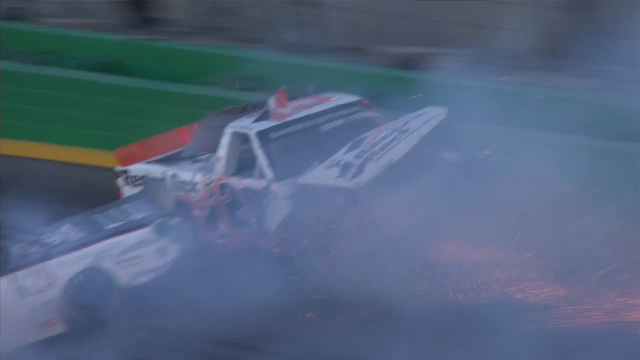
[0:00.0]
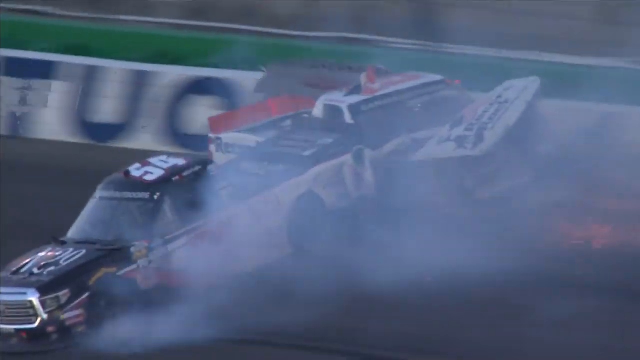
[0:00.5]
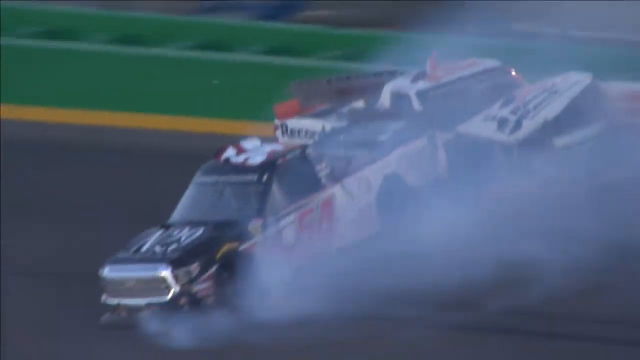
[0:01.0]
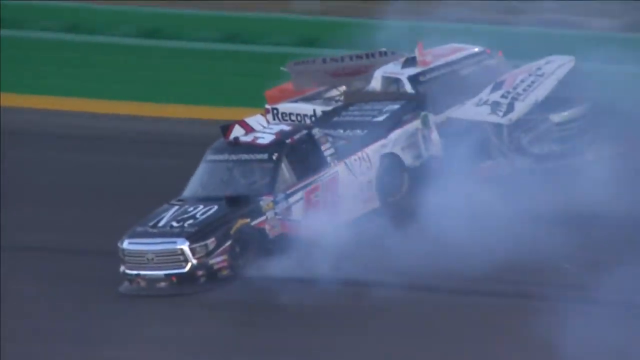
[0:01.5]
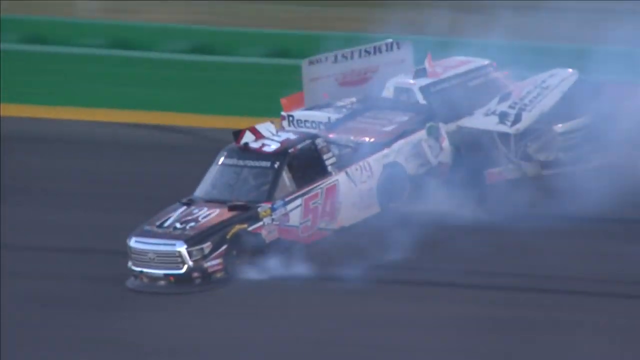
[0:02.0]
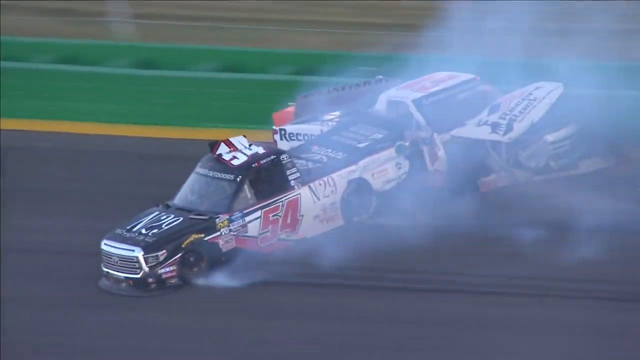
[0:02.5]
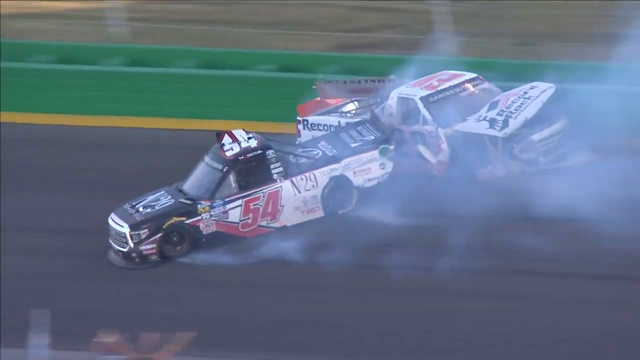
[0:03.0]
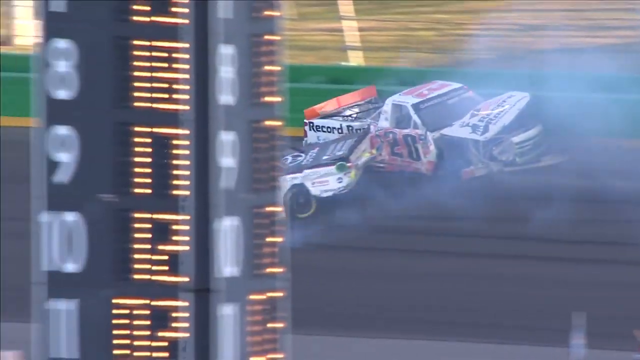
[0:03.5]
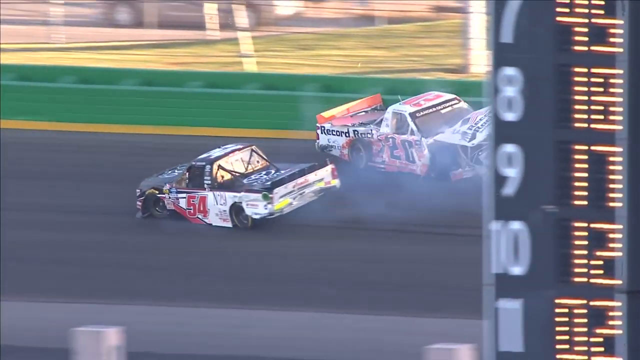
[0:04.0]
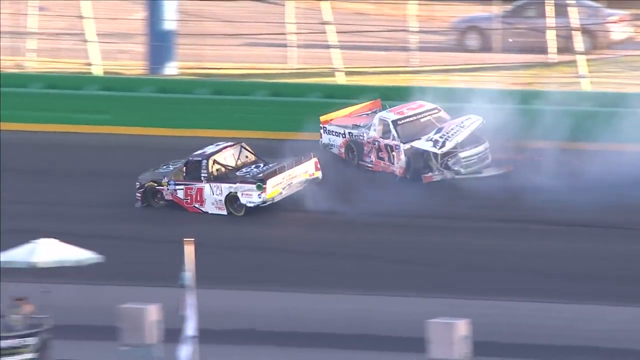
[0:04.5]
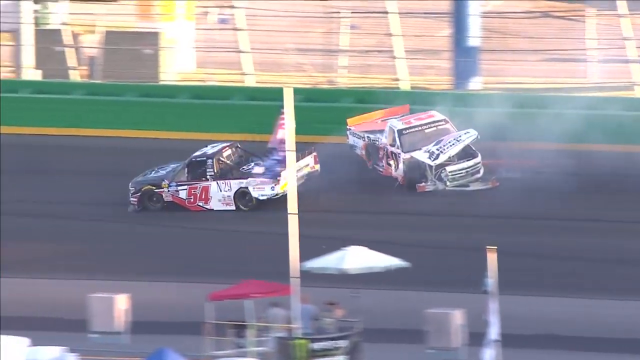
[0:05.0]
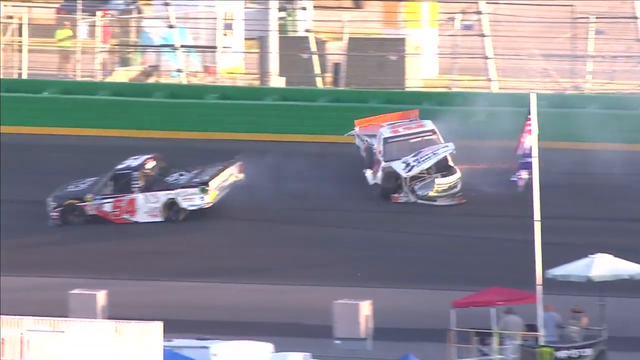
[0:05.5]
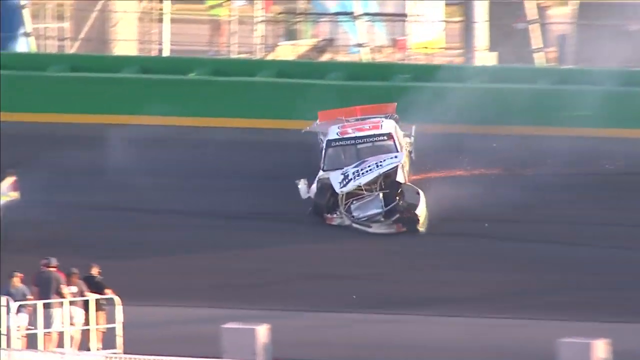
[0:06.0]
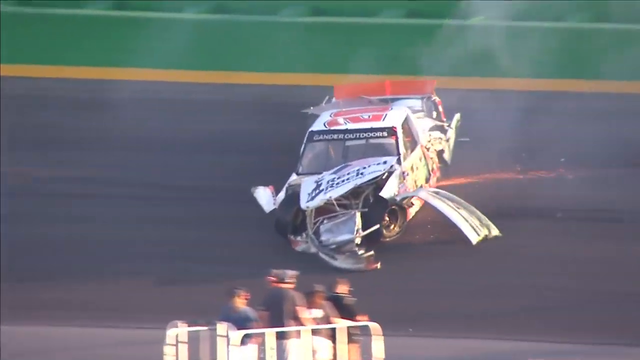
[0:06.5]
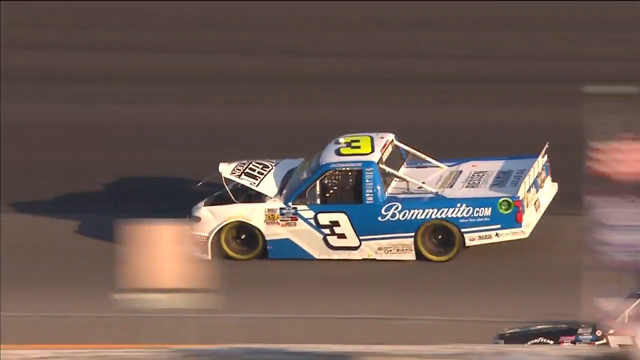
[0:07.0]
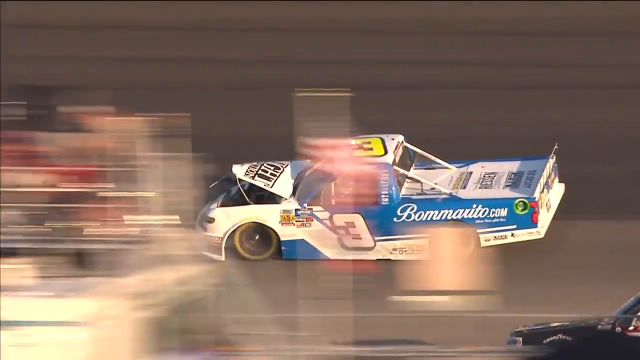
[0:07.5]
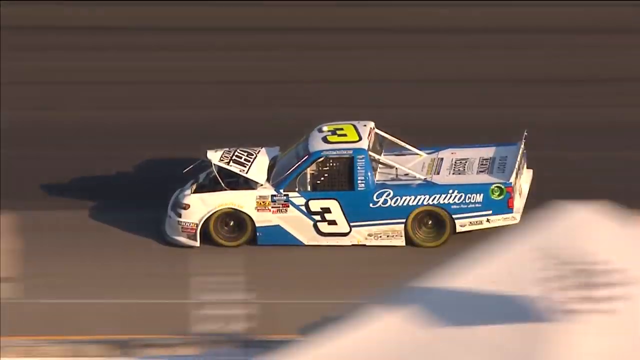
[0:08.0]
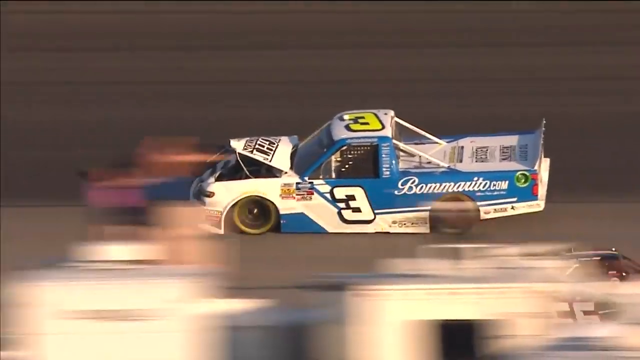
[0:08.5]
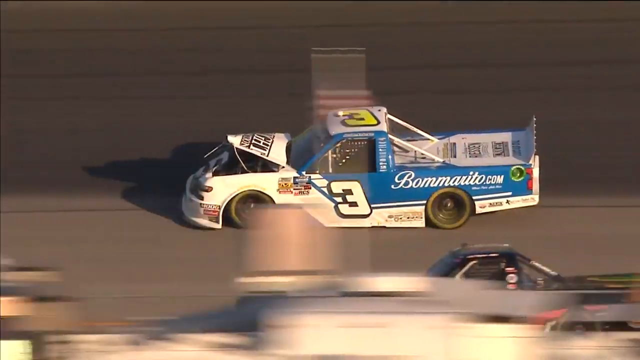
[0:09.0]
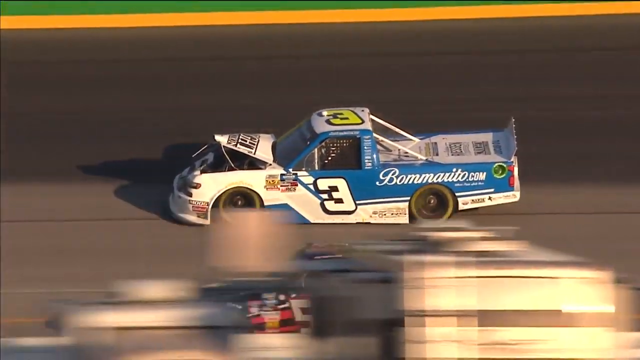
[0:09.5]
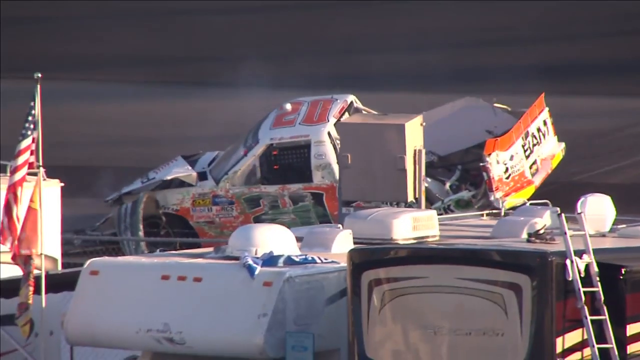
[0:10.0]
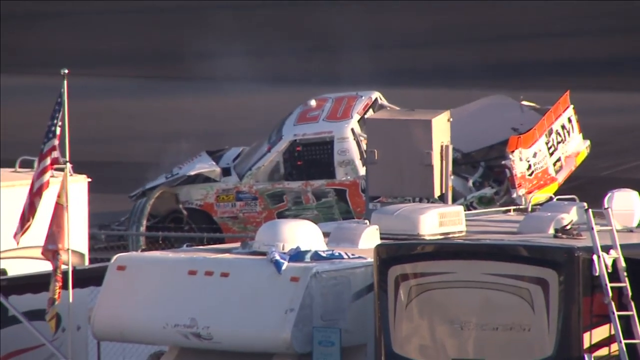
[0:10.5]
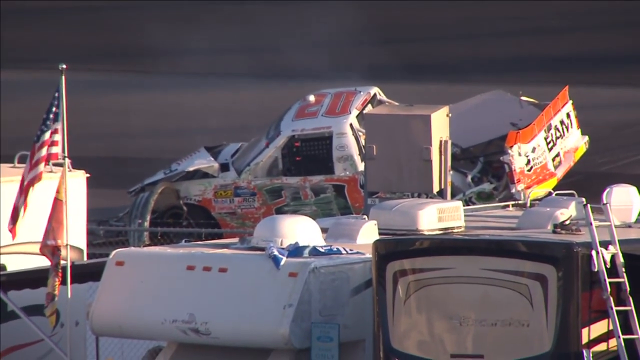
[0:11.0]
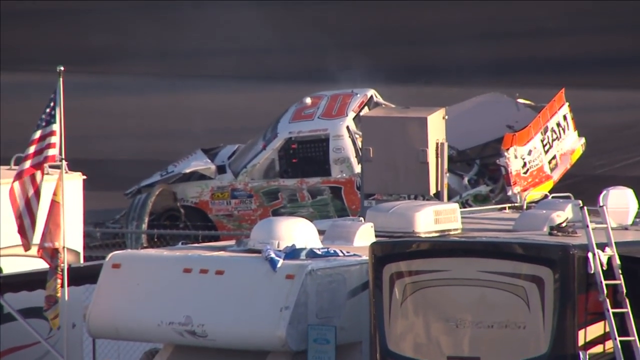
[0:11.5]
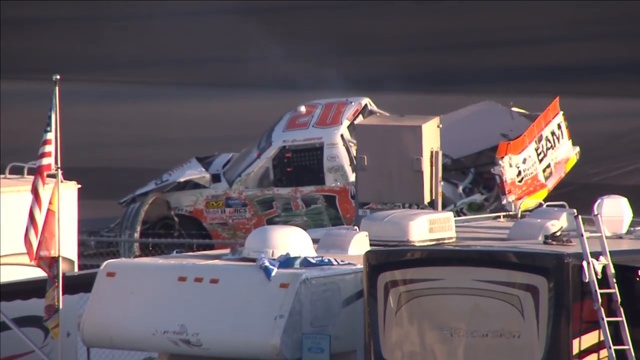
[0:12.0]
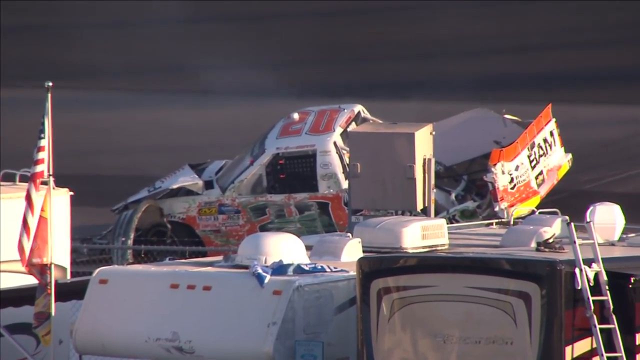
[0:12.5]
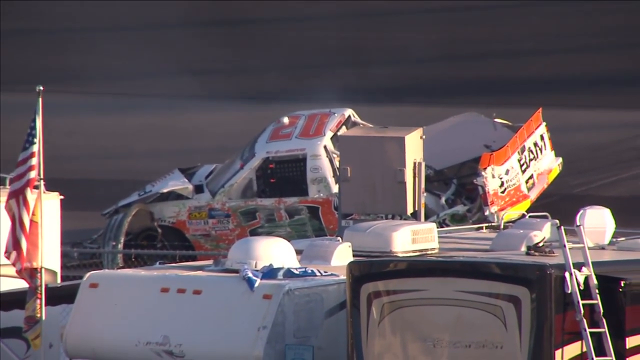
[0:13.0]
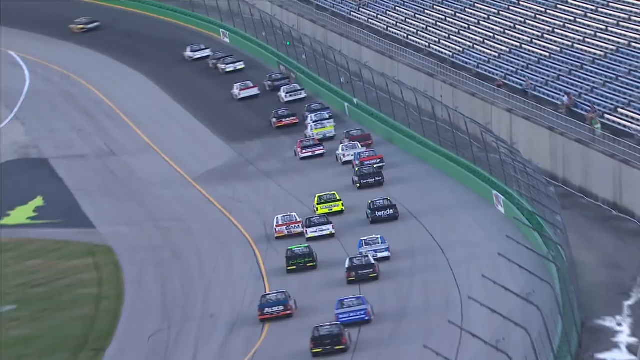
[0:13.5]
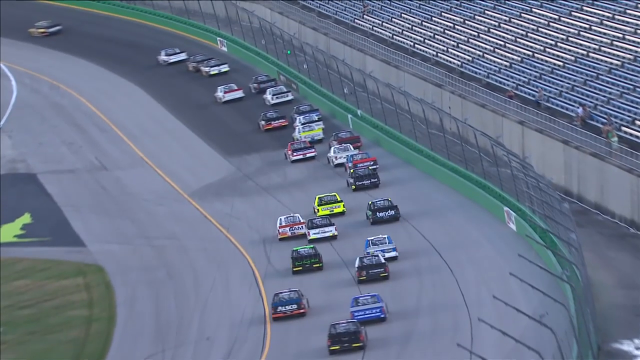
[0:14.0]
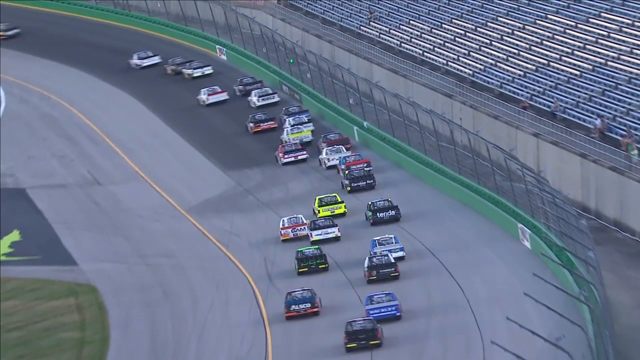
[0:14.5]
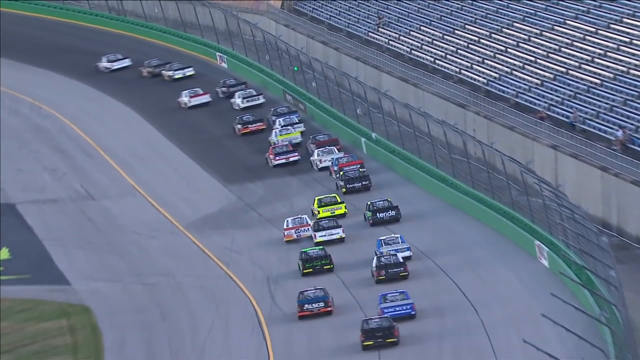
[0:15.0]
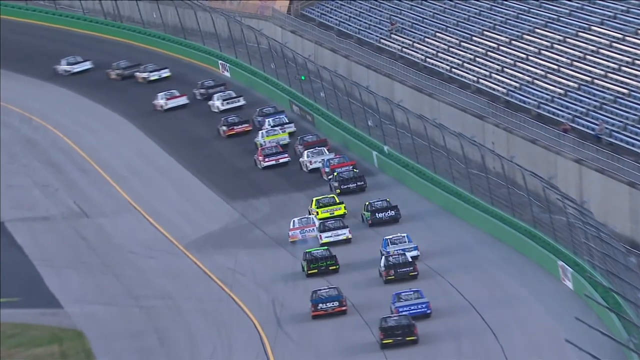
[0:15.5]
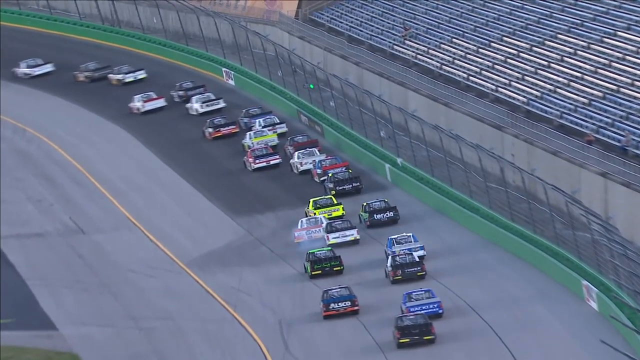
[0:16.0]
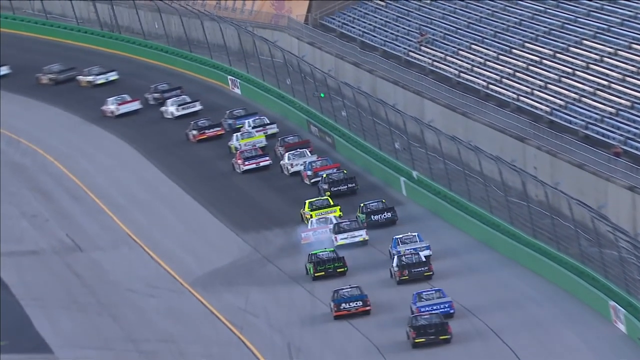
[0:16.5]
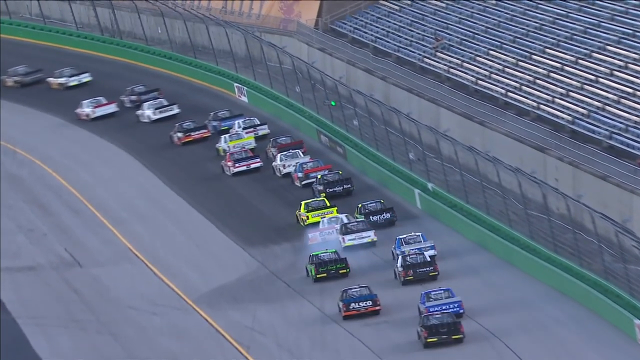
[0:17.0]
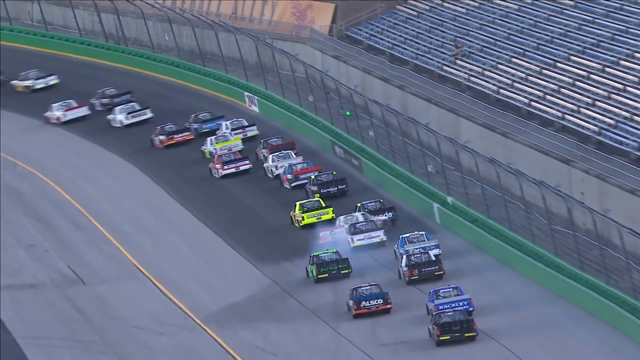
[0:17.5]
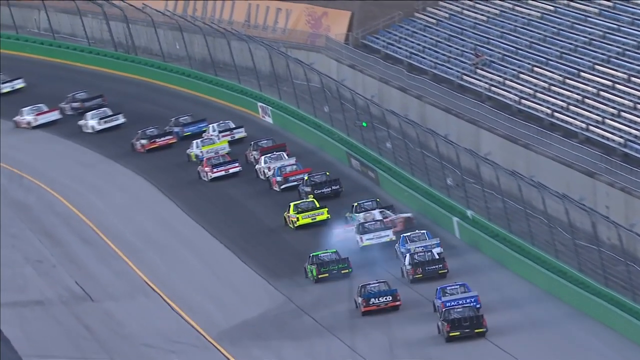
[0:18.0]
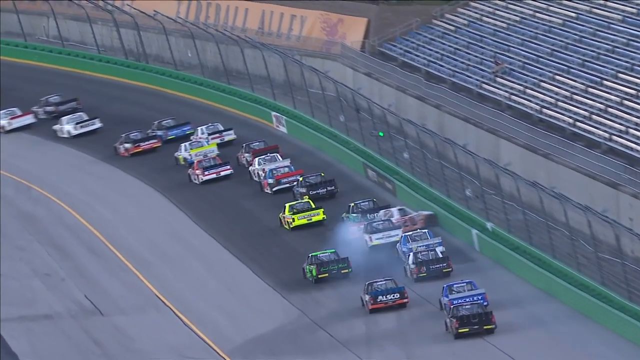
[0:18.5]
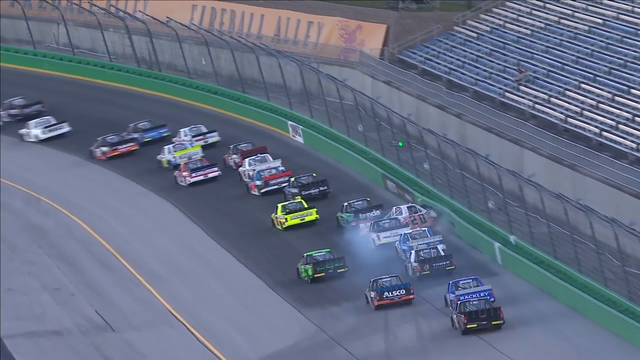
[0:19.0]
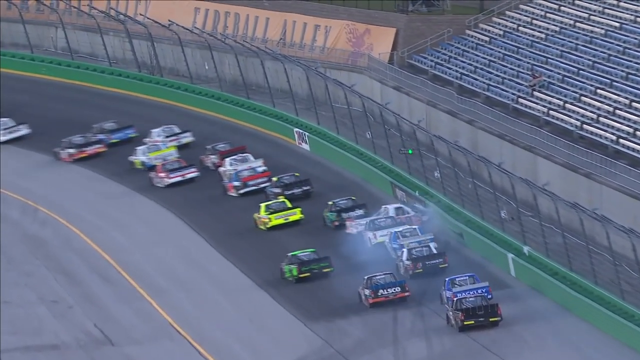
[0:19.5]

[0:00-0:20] A race of some sort is shown, zoomed in, as two vehicles crash into each other. They almost look like trucks rather than race cars. One car is facing the wrong way, almost going backwards because of the crash, and the rear of the other car is into the side of that wrong-way car. Smoke comes out from where their tires are, and fire looks like it is coming out of the bottom of one car. The view changes to a different vantage point or part of the race: a side view of a car moving right to left. Another car follows that looks like it took much more damage; its front end is all banged up and its back is damaged as well. It is stopped, and a little bit of smoke seems to come out of its top. Next comes a high vantage point looking down the race track, with several cars on the right-hand side. The footage appears to be in slow motion, a replay of how the accident took place.